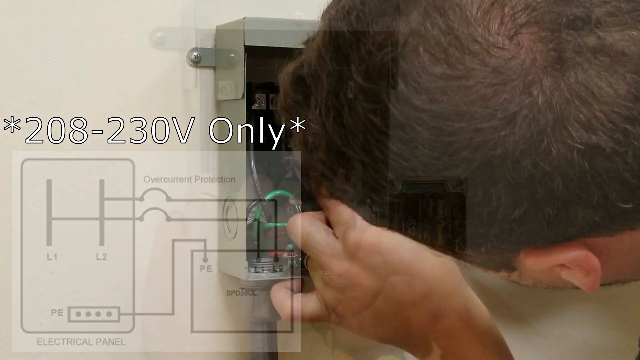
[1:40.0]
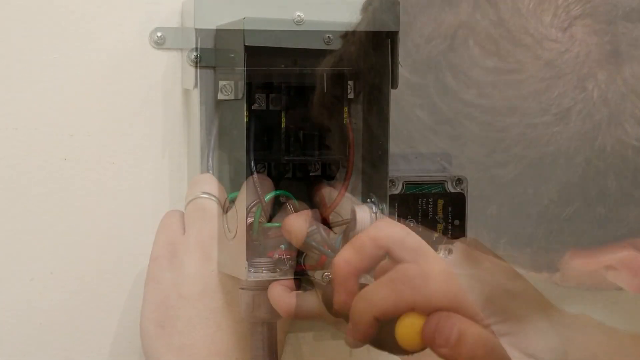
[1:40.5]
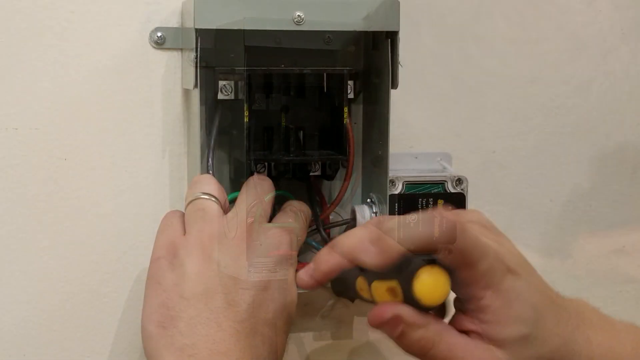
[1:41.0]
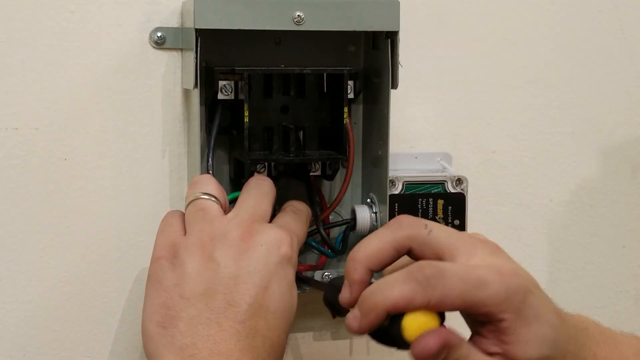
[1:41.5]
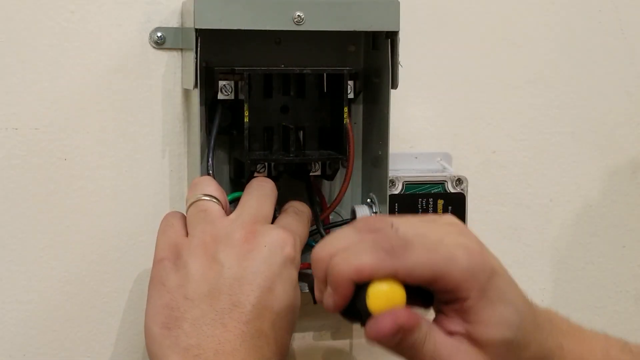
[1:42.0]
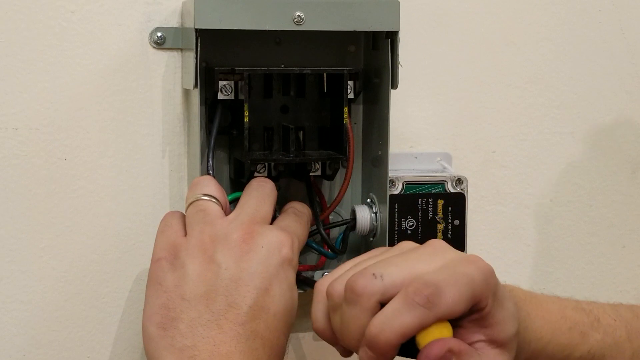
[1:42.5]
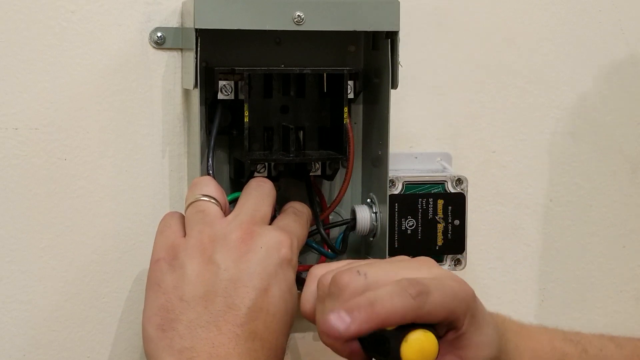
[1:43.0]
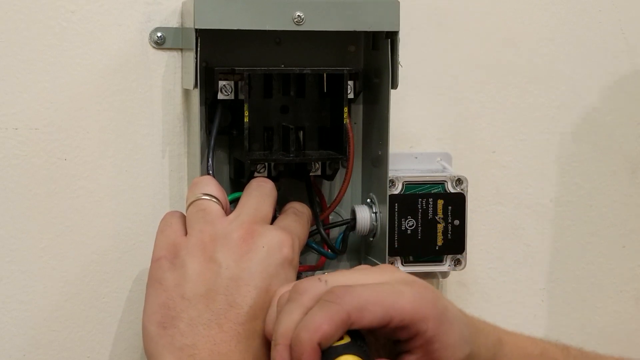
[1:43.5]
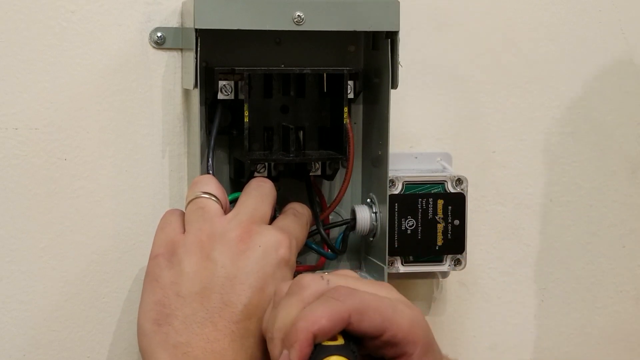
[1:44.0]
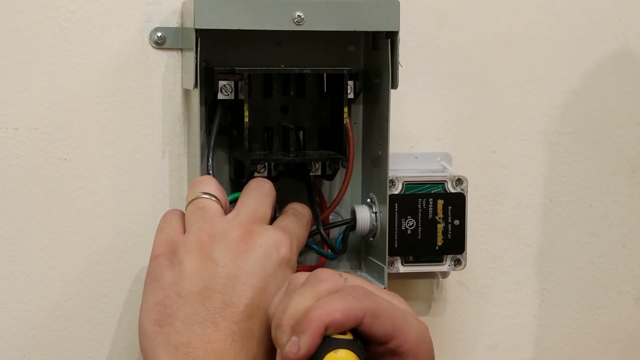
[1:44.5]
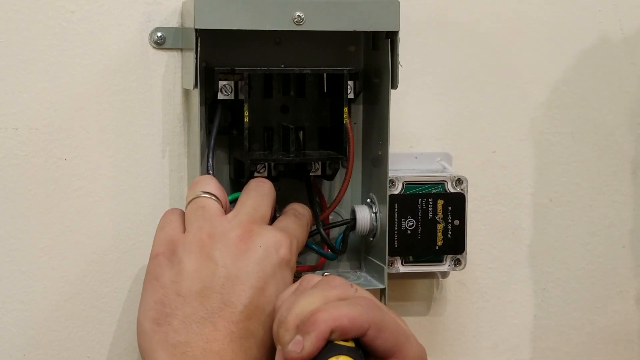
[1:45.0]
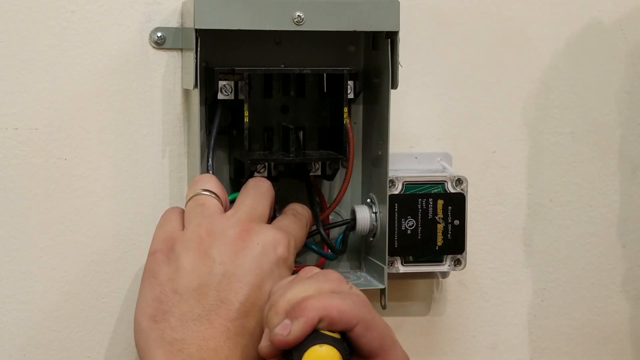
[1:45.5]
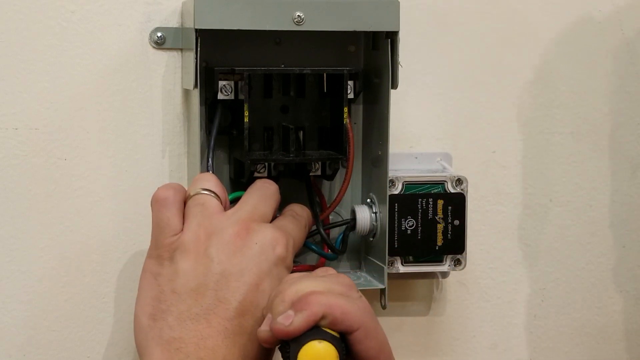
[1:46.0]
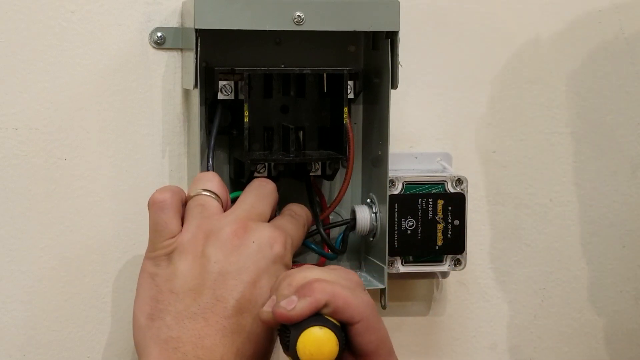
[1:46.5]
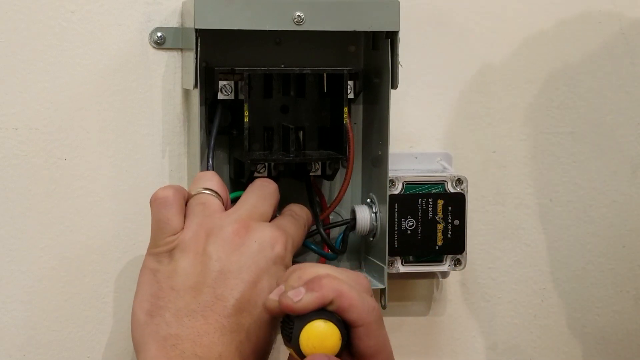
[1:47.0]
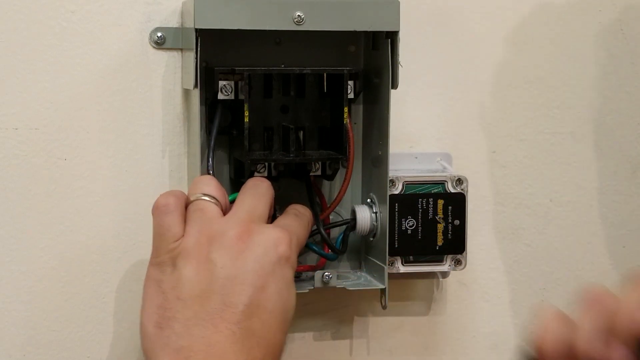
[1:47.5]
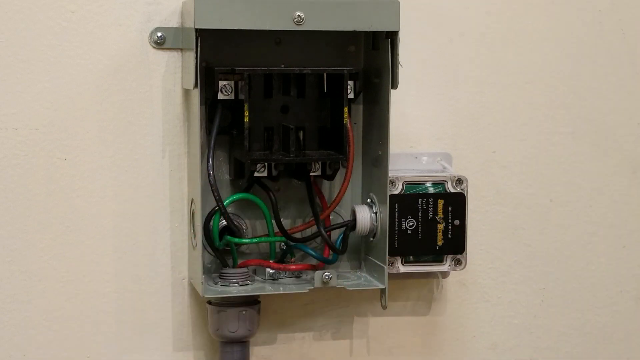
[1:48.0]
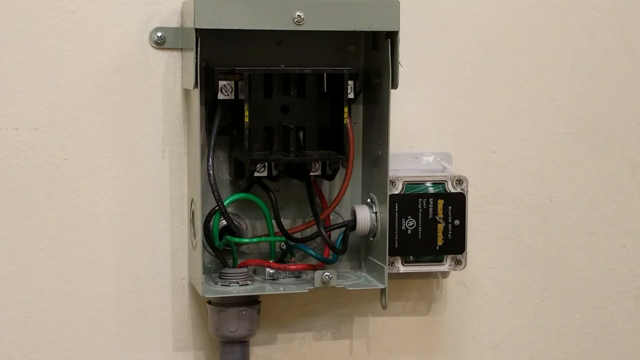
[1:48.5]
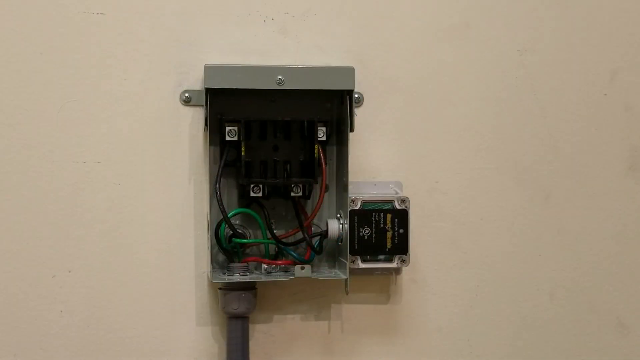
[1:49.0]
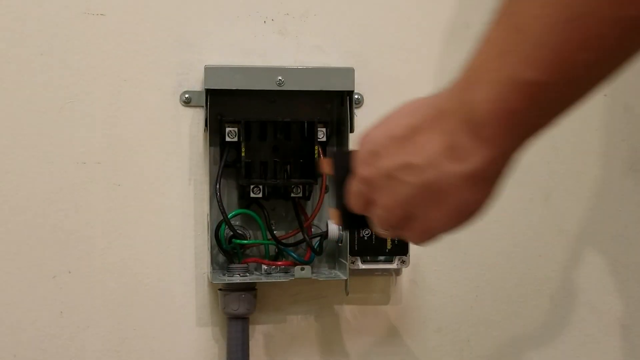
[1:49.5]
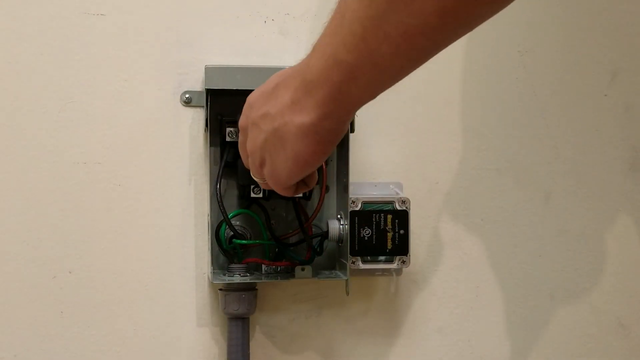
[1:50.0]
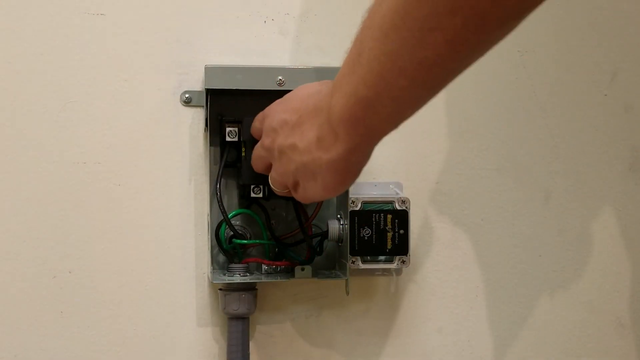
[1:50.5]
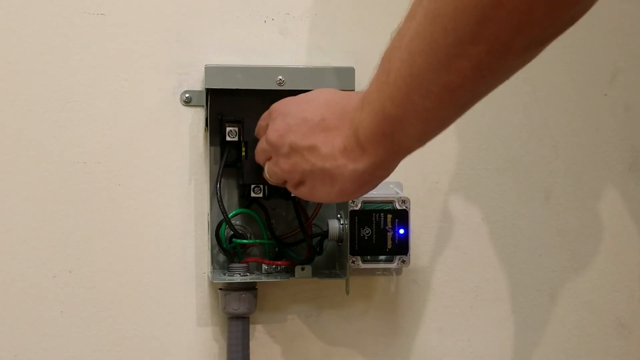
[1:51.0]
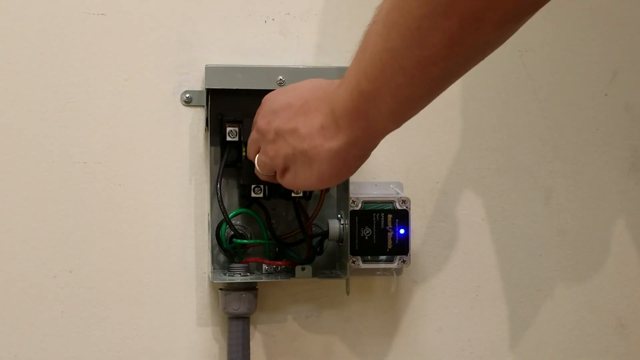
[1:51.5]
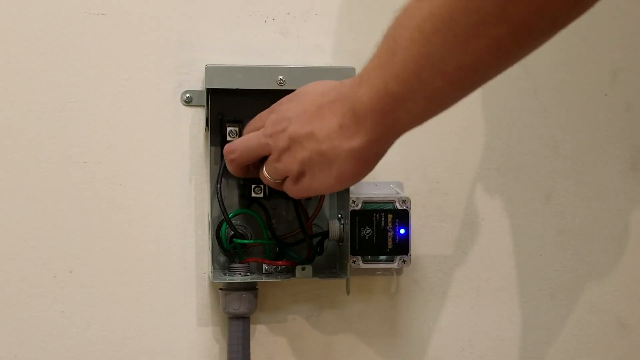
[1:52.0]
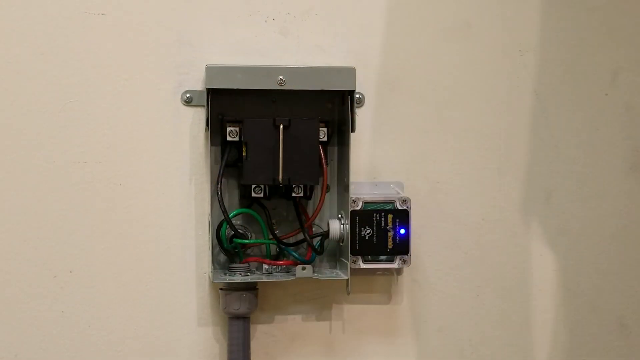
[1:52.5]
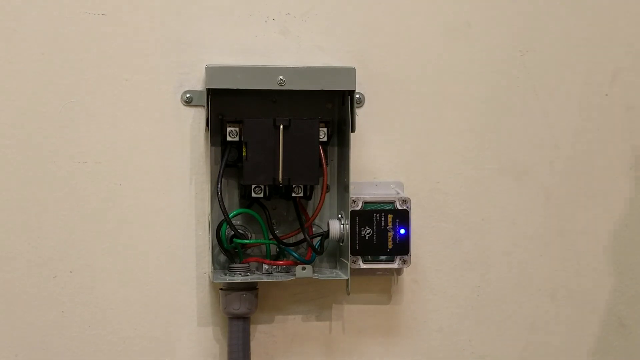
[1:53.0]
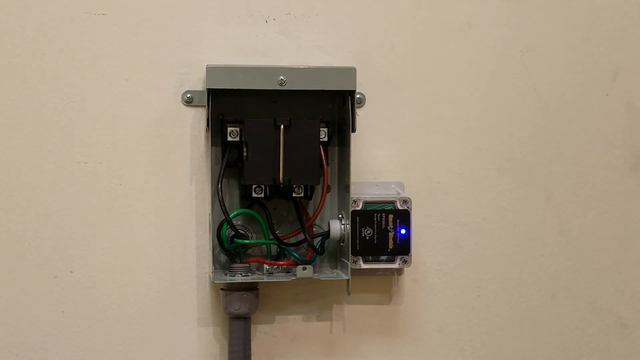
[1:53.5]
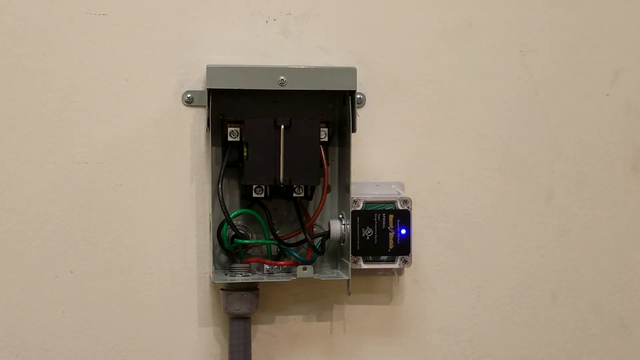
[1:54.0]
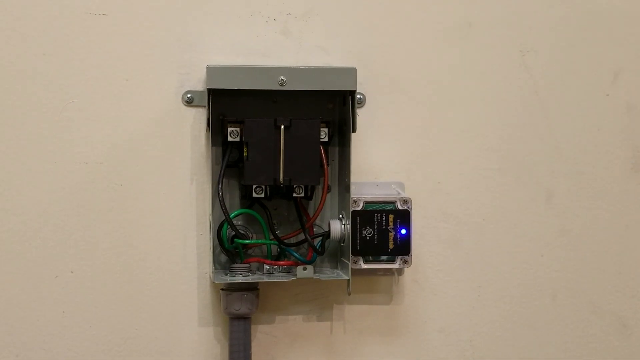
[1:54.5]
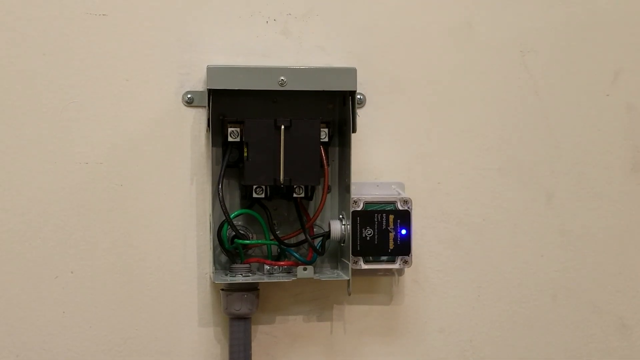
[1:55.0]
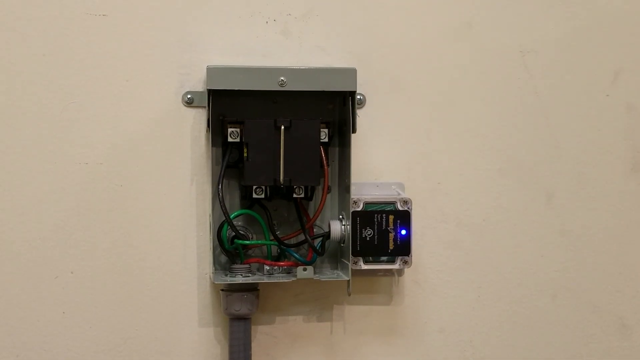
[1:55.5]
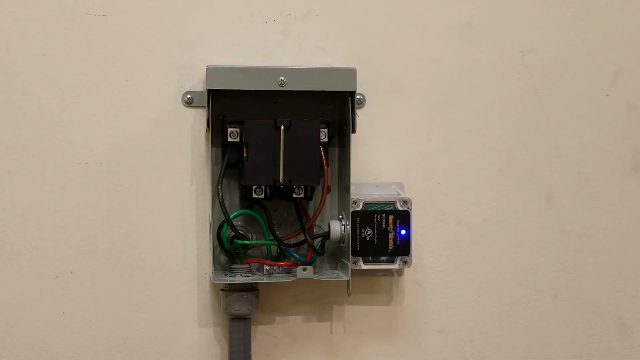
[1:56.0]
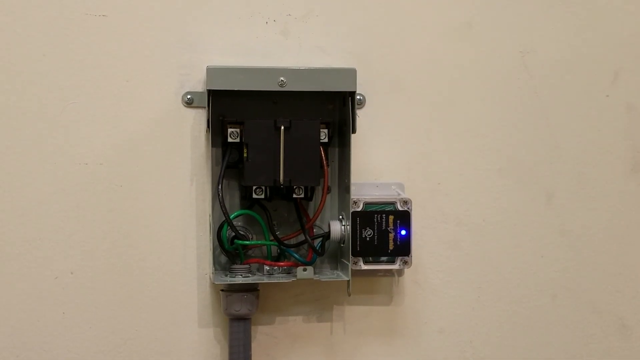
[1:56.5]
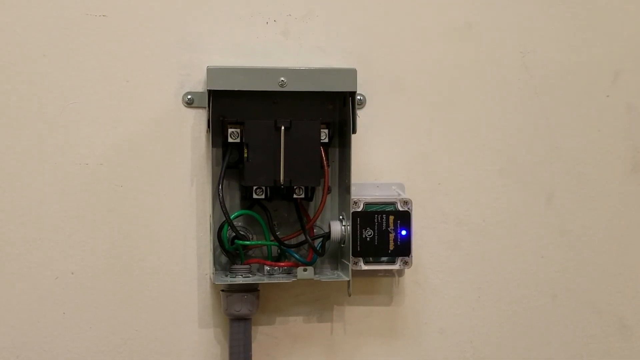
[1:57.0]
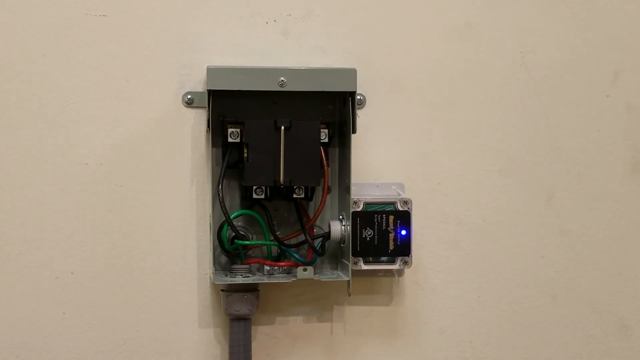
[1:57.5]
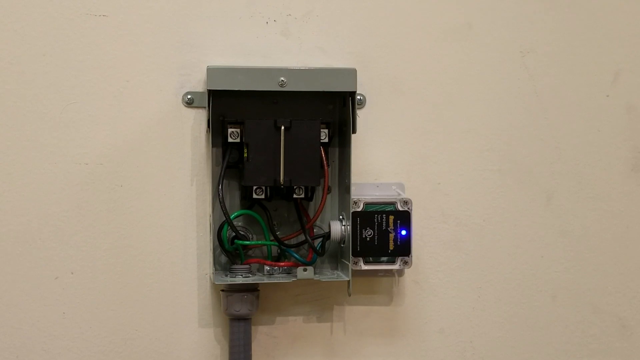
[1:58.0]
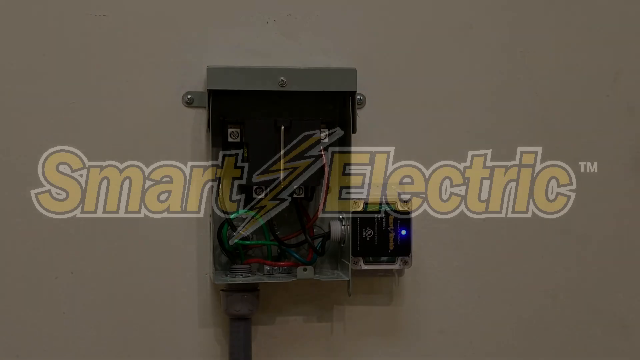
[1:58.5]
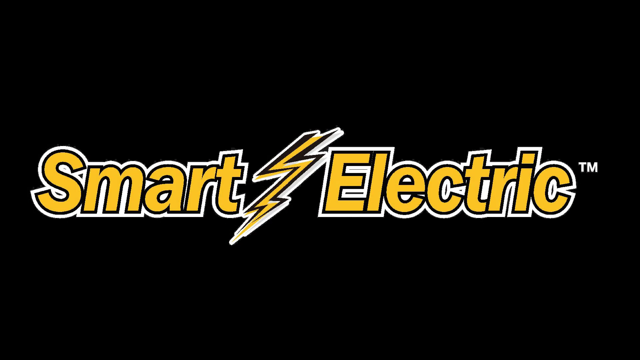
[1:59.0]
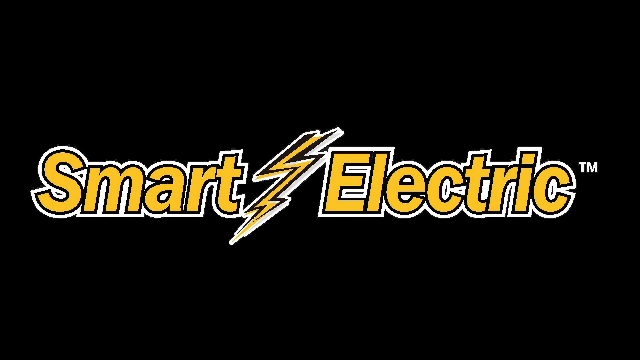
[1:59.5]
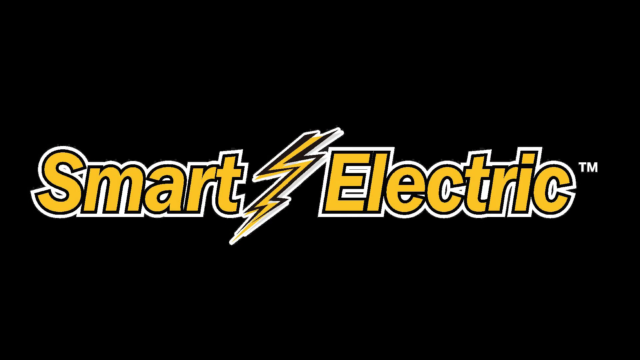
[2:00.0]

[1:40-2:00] He brings out his black and yellow screwdriver again. His left hand, with a ring on the ring finger, holds something still, while his right hand uses the screwdriver to screw something in, hidden by the holding hand. He tightens it and eventually lets go, and both hands leave the screen. The panel shows several connected wires of various colors. The L1 and L2 wires from the surge protector seem to be connected to the base of the black box inside the panel, and the green wire, presumably the PE wire, is connected to the bottom of a tiny silver box inside the panel, seemingly matching the earlier diagram. The man puts a cover or black piece on top of the black box inside the panel, which turns on the surge protector's blue light. He leaves the screen, and the video ends with the Smart Electric logo on a black background.